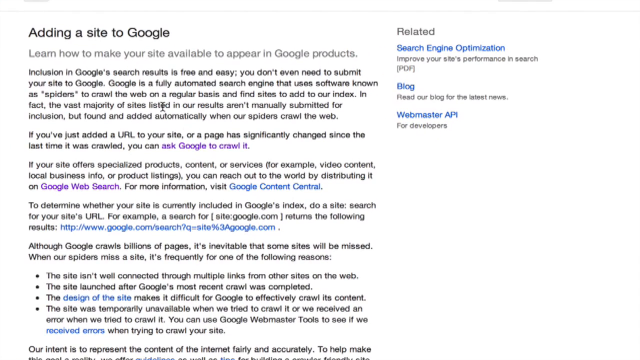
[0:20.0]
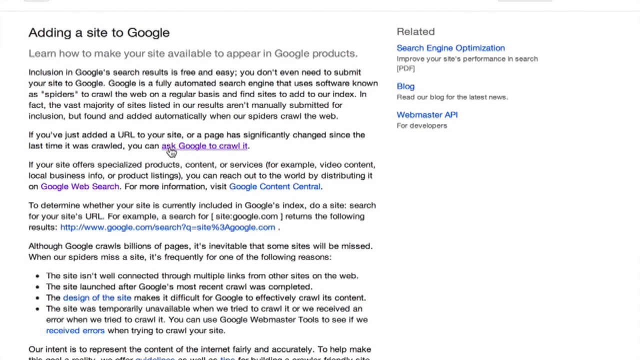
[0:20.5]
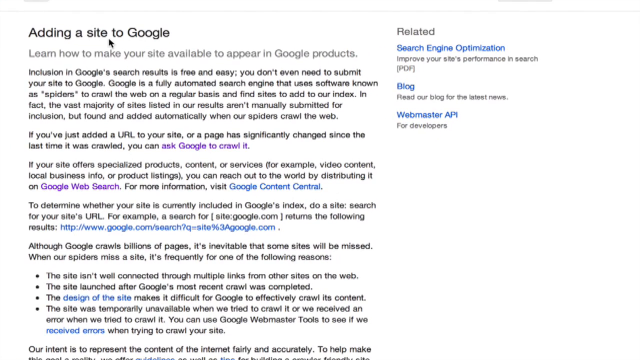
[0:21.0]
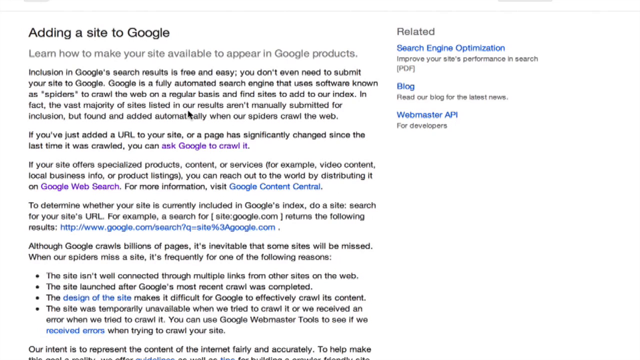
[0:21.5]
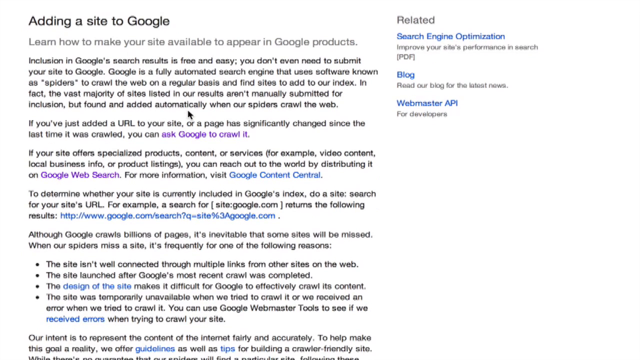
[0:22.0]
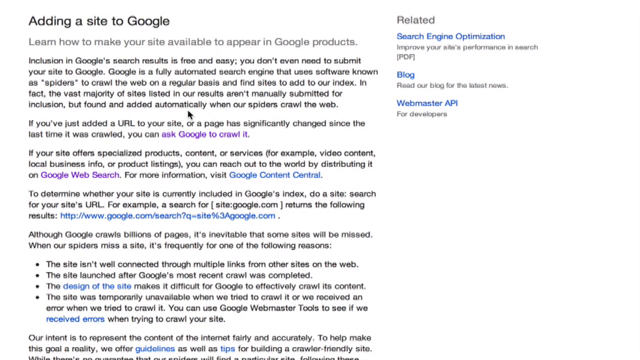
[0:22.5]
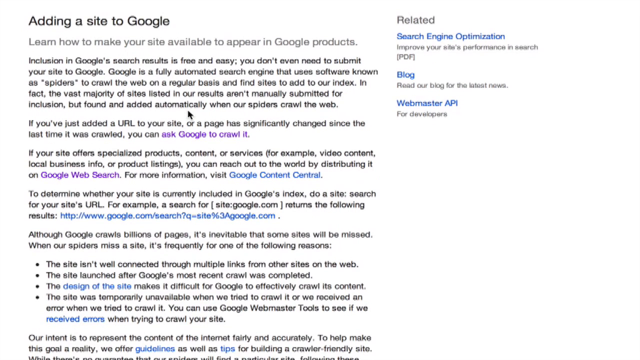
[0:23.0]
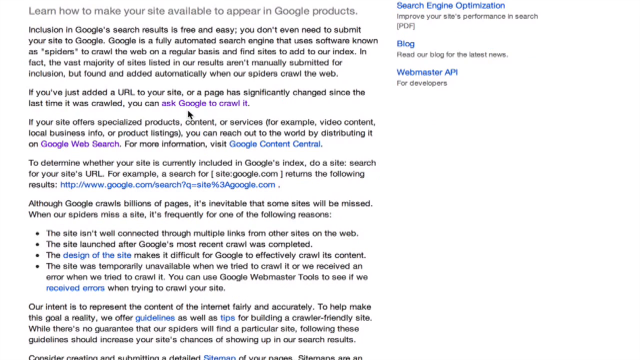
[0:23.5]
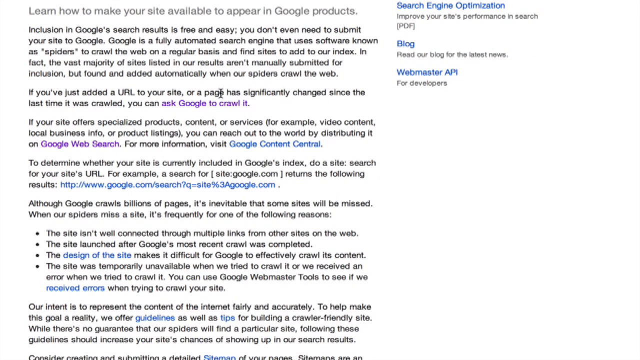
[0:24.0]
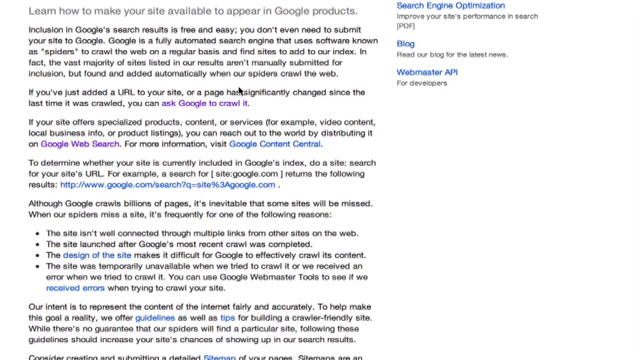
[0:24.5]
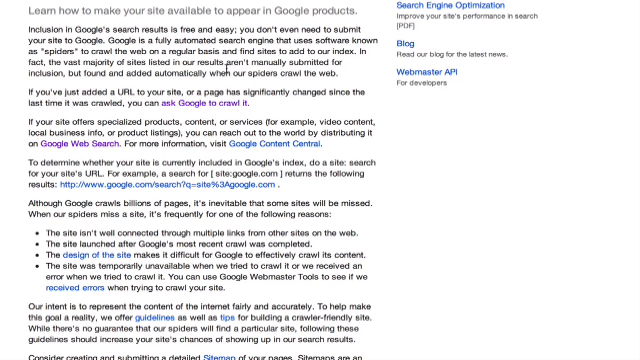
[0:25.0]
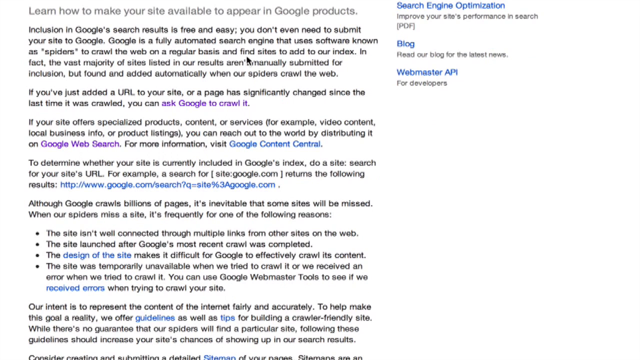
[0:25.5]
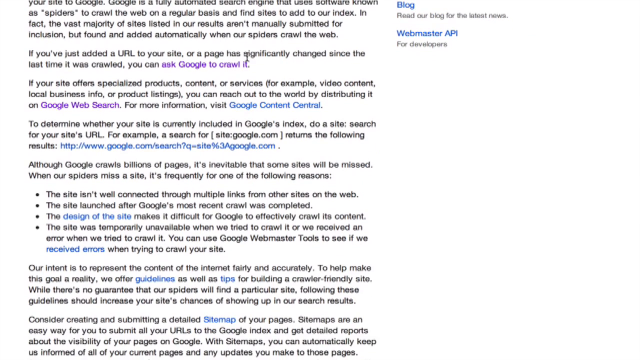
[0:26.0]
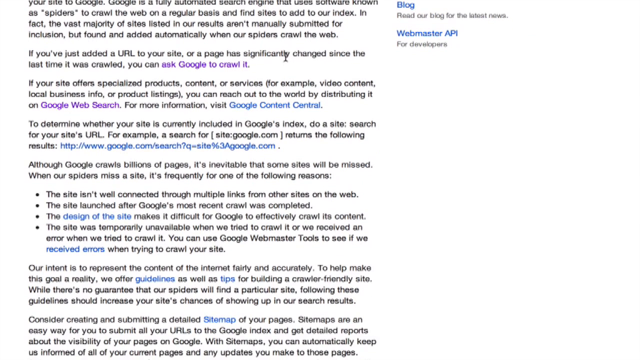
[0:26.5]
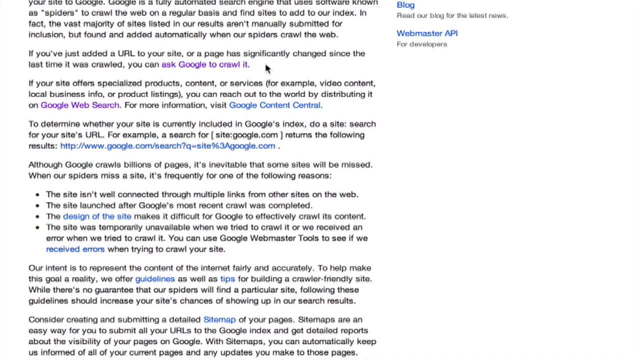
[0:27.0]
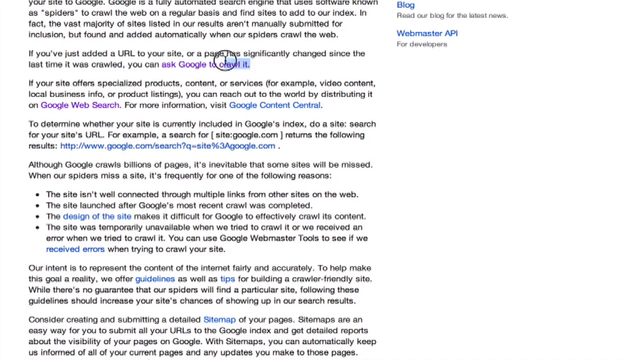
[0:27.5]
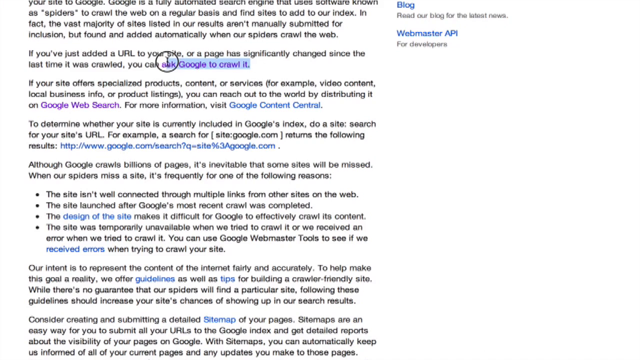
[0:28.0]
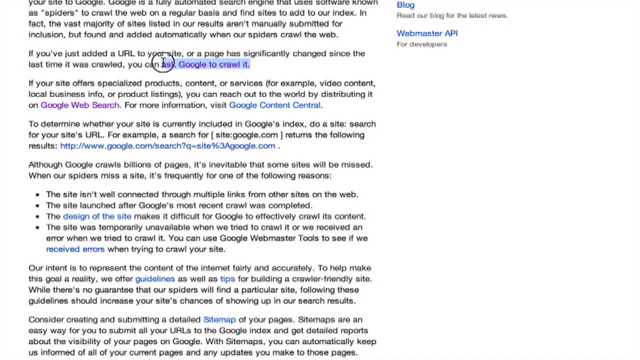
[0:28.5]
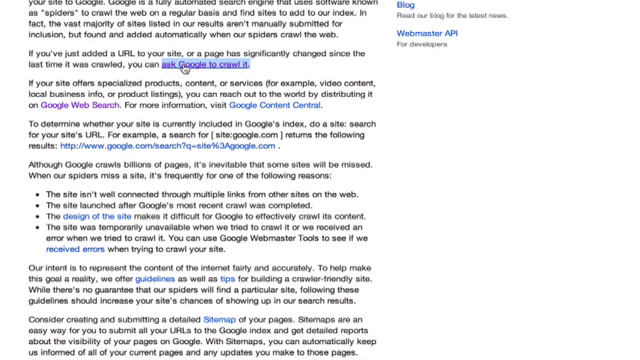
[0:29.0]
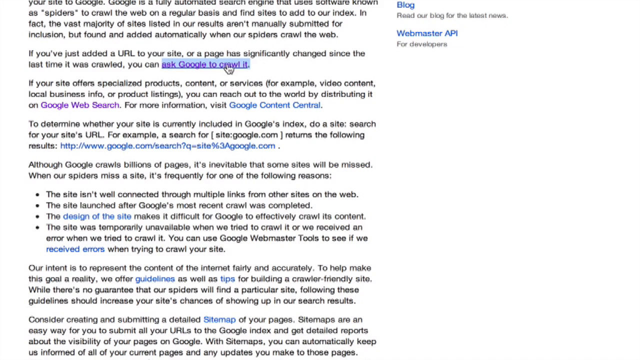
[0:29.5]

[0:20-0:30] A white background holds text across about two thirds of the screen, with different text on the remaining third. At the top left is a heading in darker font, "adding a site to Google", and below it in fainter font, "learn how to make your site available to appear in Google products"; this text continues further down. On the right-hand third is the word "related", roughly in line horizontally with the heading. Below it in blue font is "search engine optimization", followed by "improve your site's performance in search" and, on a new line, "(PDF)". Below that is "blog" in blue font with "read our blog for the latest news" in gray font beneath it. After a space comes "webmaster API" in blue with "for developers" in gray below it.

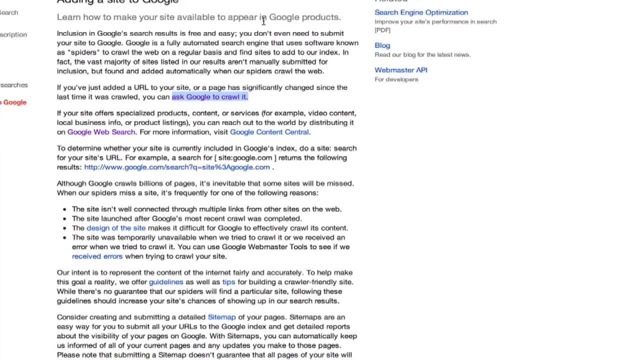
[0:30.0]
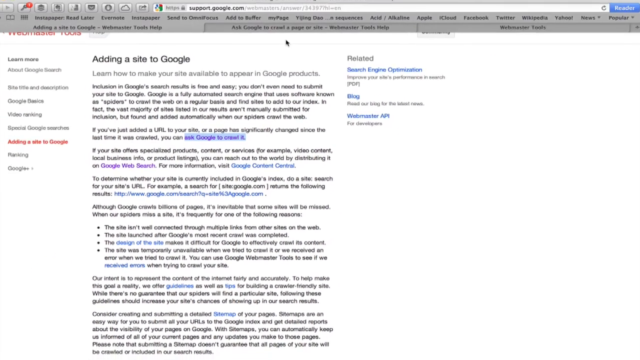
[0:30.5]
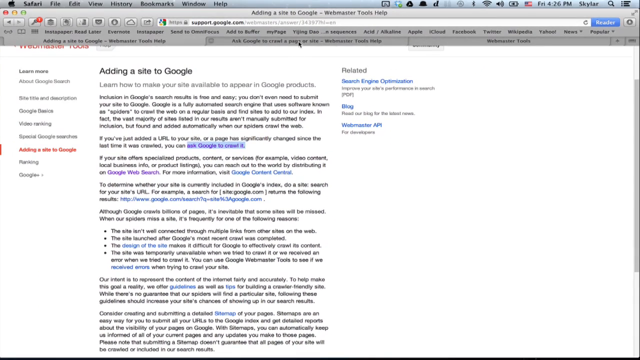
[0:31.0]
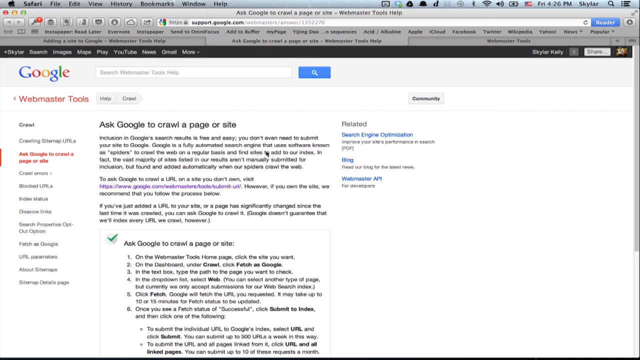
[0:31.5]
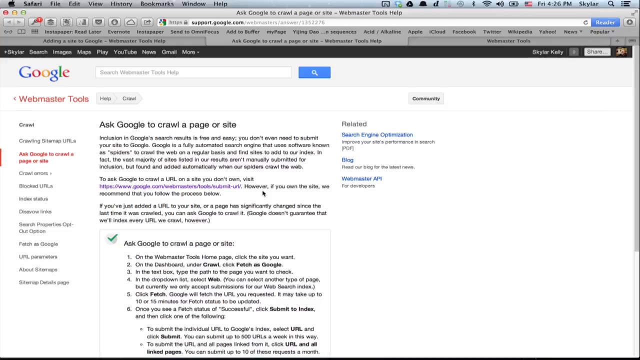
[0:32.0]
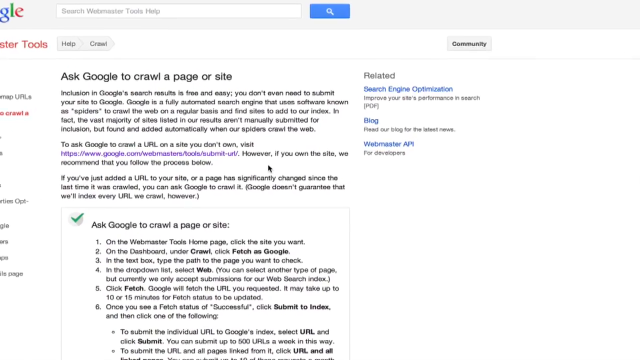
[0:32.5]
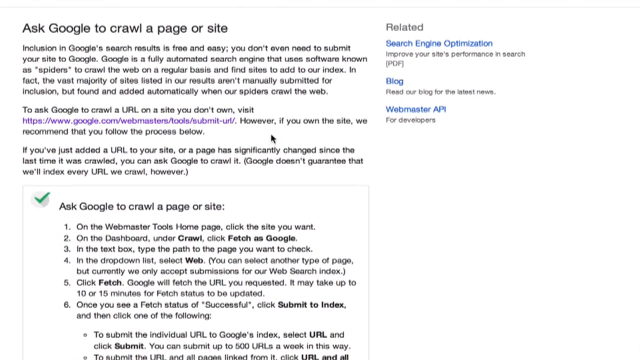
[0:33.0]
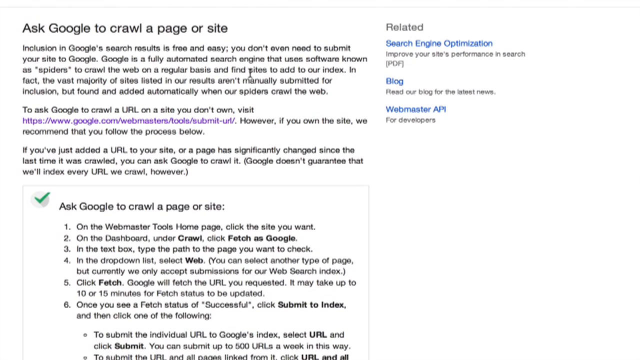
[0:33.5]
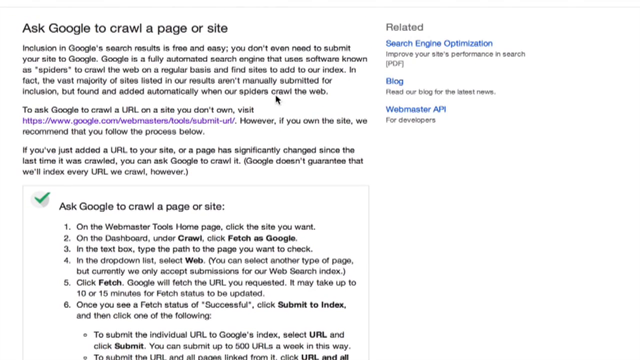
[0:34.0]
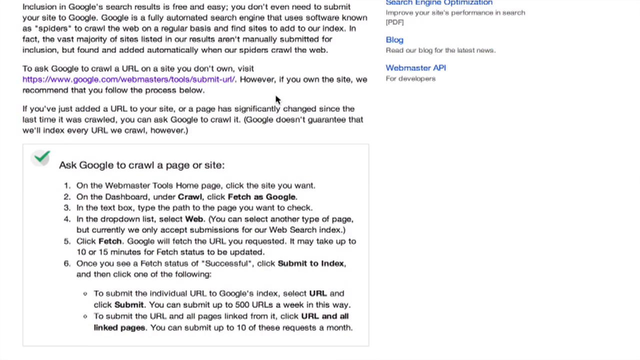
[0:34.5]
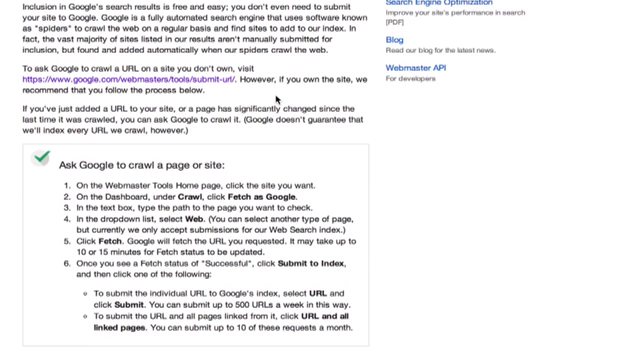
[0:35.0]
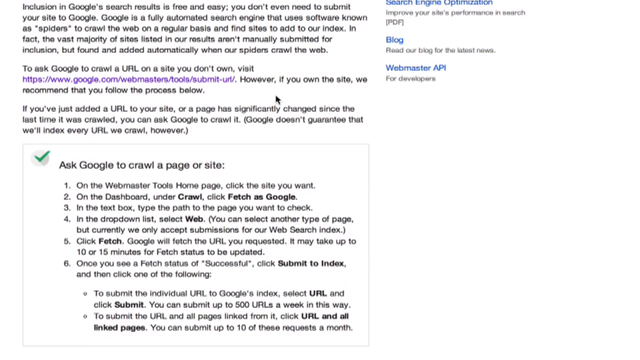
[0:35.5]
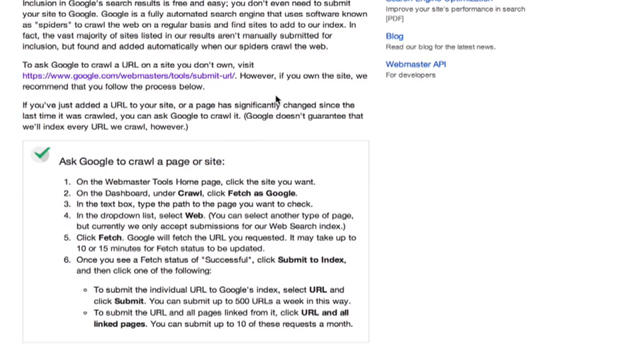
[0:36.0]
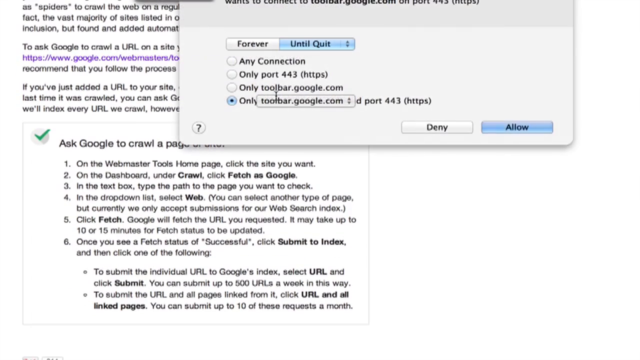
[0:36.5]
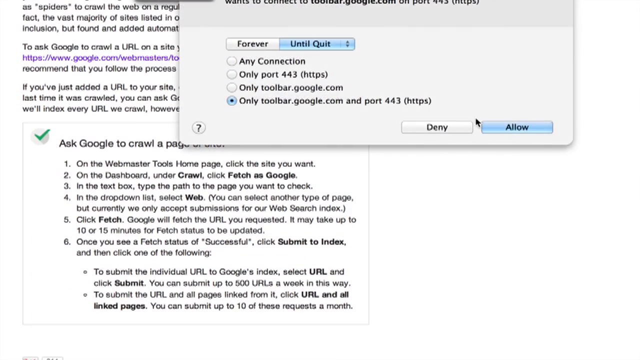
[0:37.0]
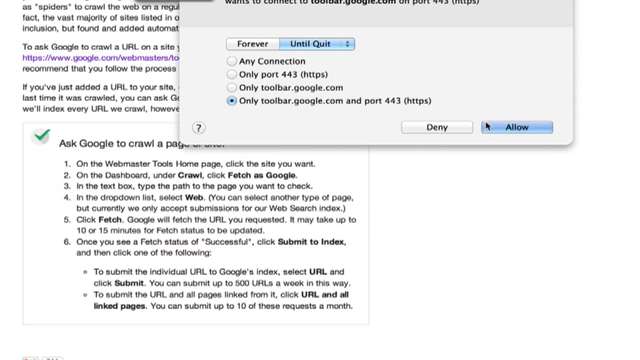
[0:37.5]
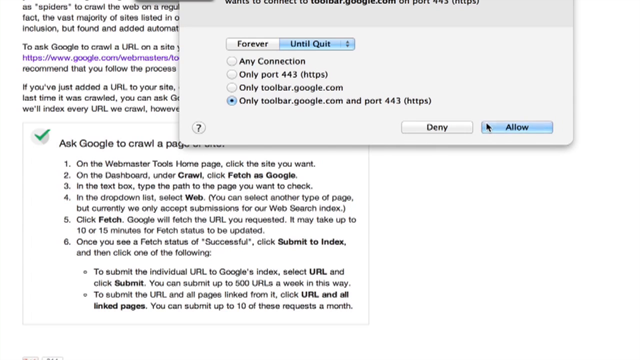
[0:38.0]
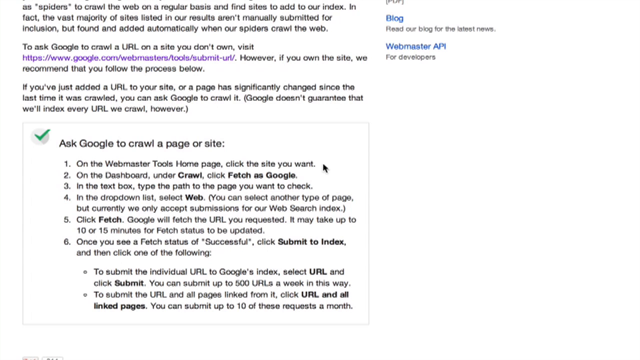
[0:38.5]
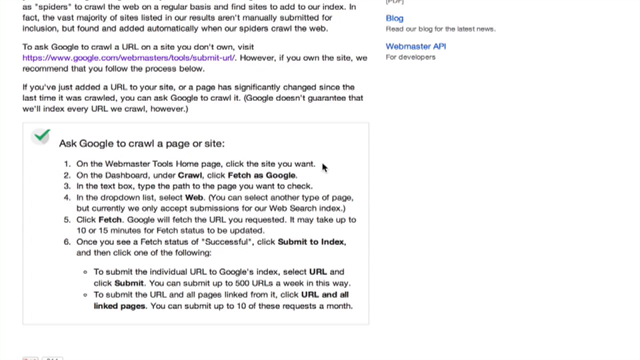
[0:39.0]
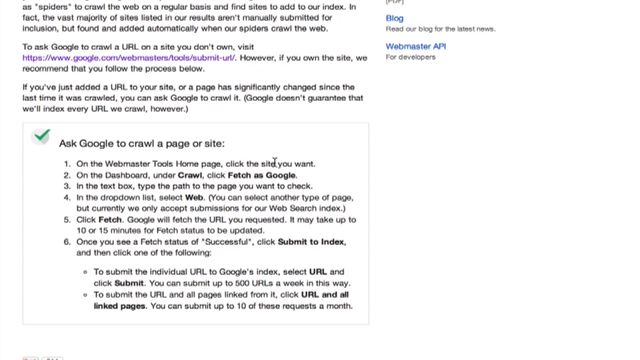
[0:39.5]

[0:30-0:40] The camera zooms out to show more of what surrounds the "adding a site to Google" page, revealing that it is on a computer screen. The top line shows a symbol followed by "Safari", presumably indicating the browser in use, then "file", "edit", "view", "history", "bookmarks" and "window" from left to right. On the other side are a number of symbols, and three in from the end is "Skylar", apparently indicating that this is the computer screen of the man seen earlier. Below the toolbars and address bars is the "adding a site to Google" text.